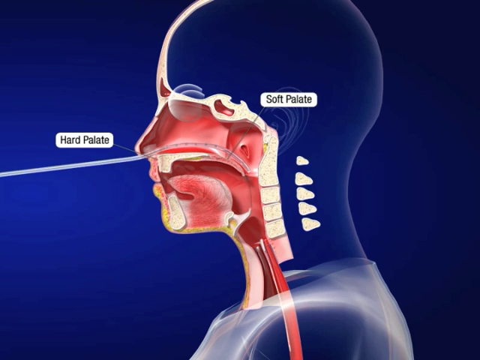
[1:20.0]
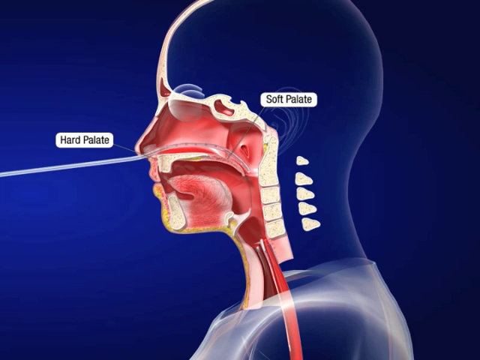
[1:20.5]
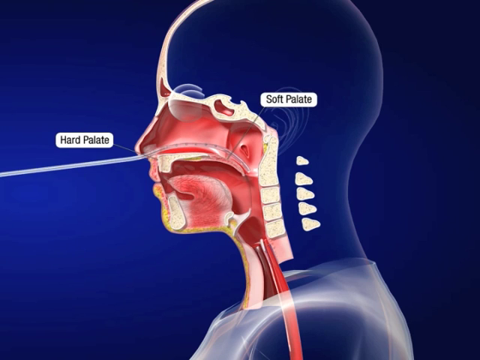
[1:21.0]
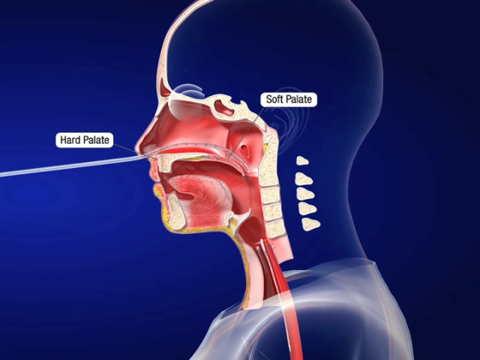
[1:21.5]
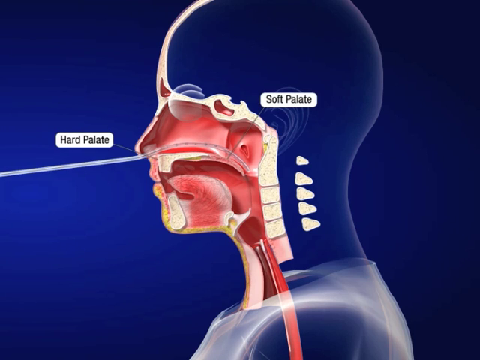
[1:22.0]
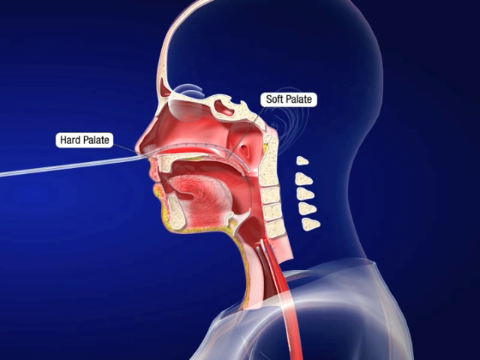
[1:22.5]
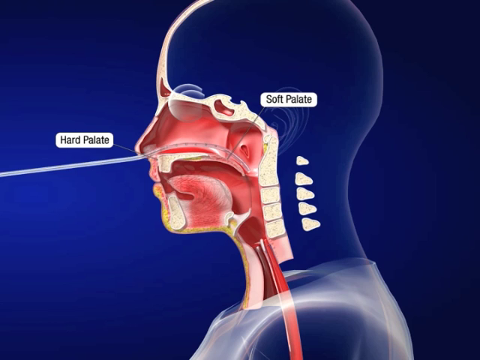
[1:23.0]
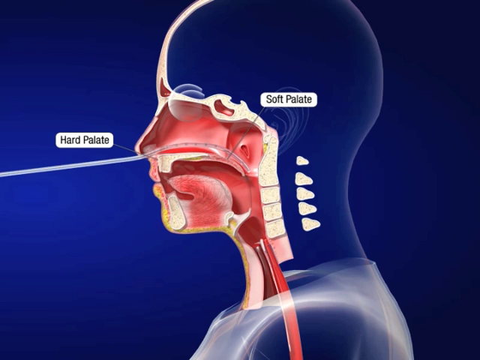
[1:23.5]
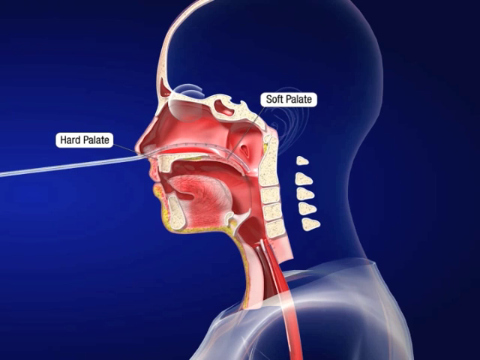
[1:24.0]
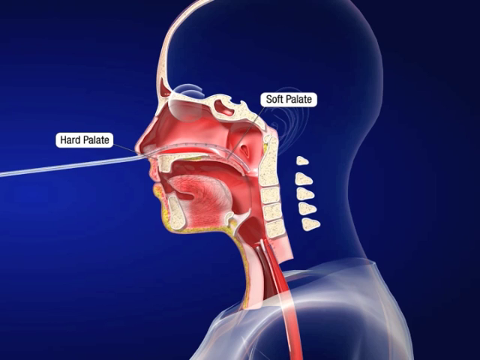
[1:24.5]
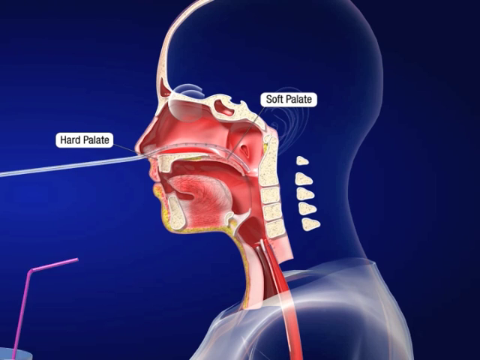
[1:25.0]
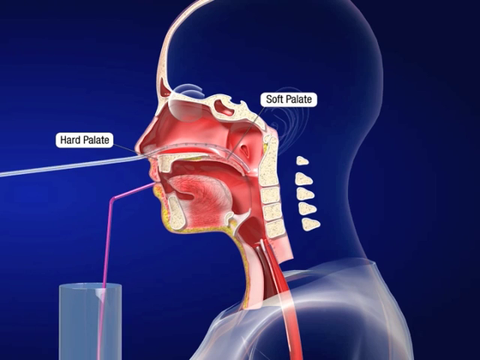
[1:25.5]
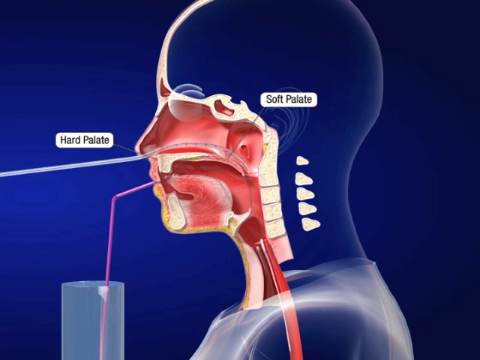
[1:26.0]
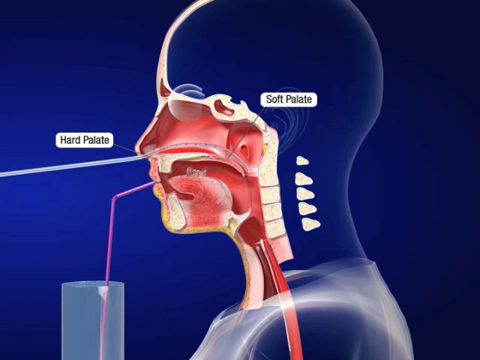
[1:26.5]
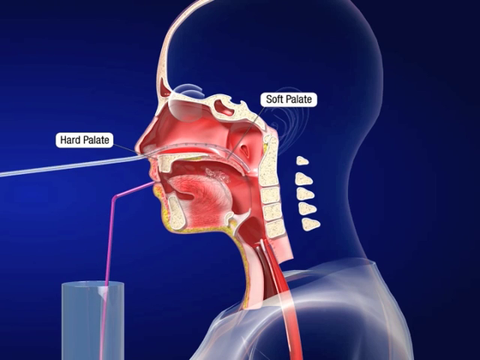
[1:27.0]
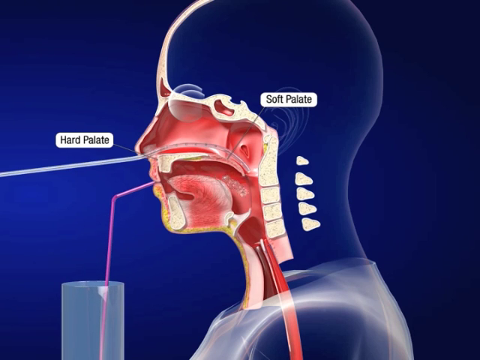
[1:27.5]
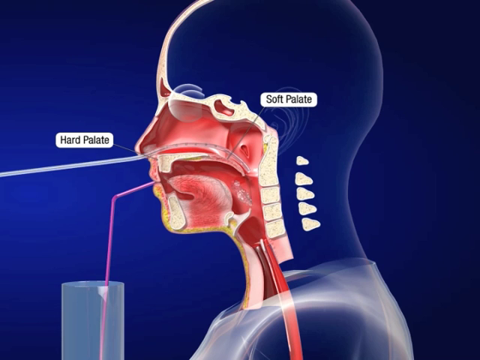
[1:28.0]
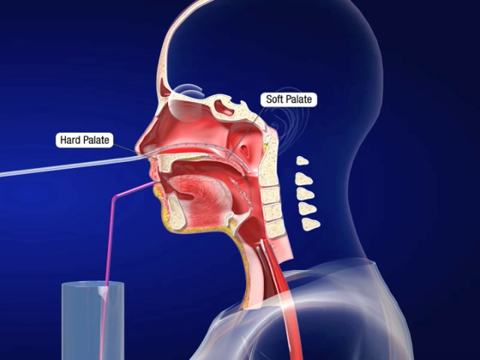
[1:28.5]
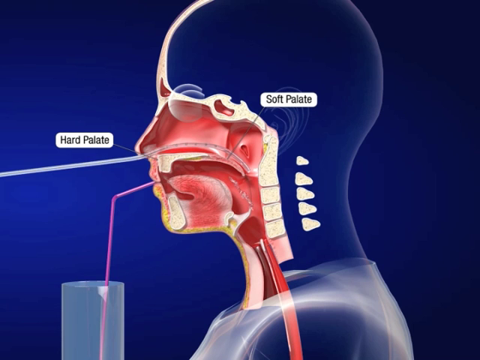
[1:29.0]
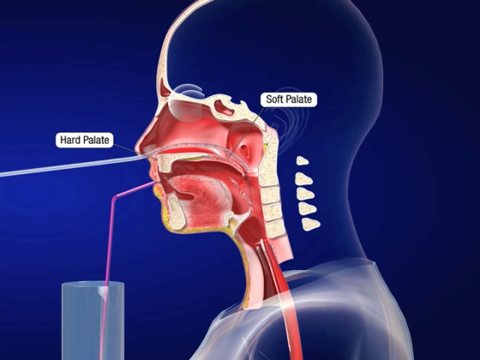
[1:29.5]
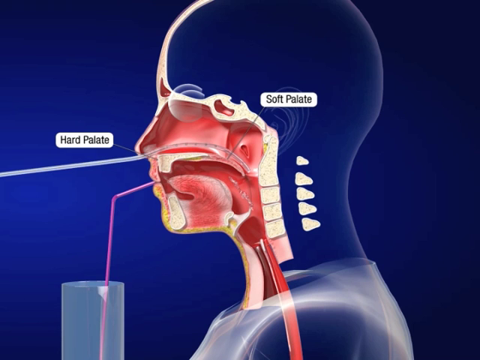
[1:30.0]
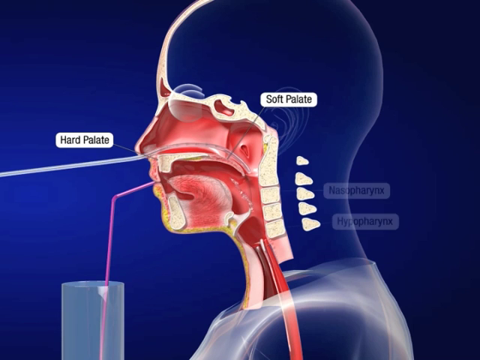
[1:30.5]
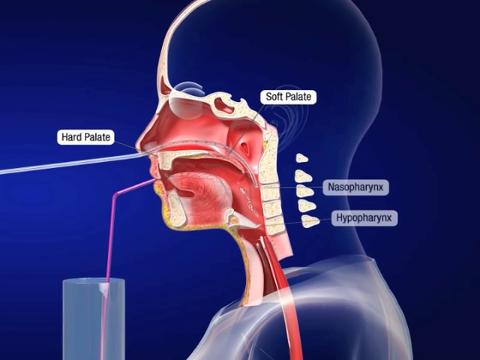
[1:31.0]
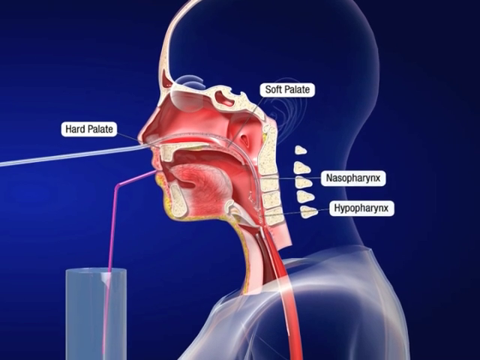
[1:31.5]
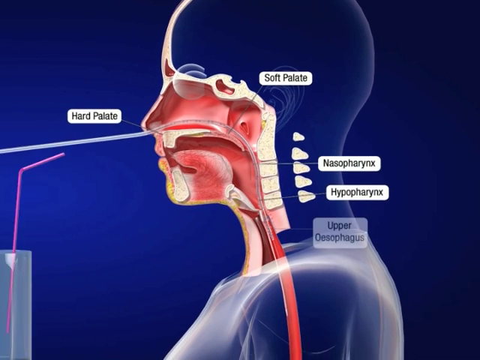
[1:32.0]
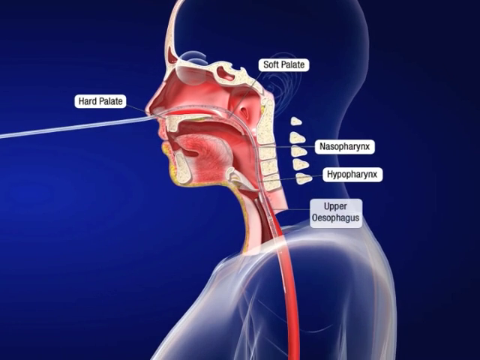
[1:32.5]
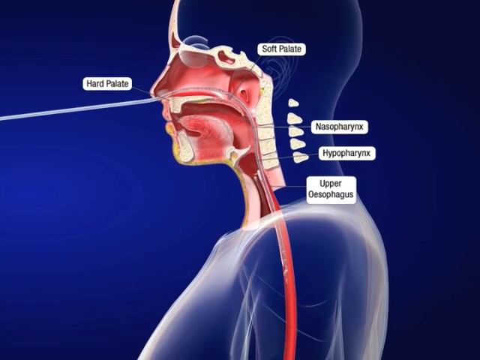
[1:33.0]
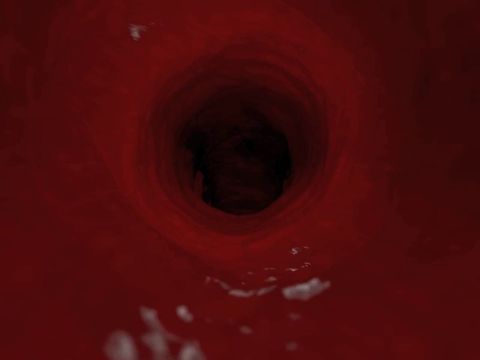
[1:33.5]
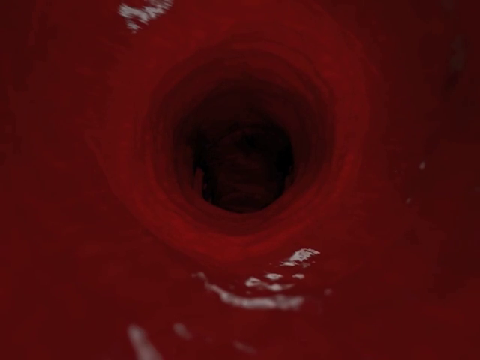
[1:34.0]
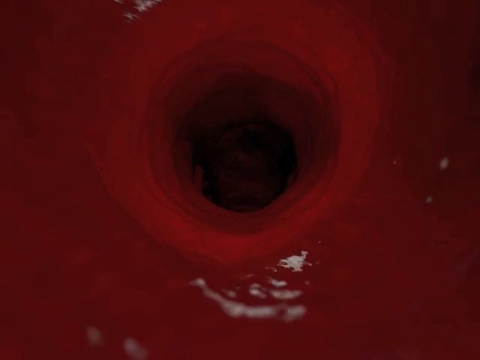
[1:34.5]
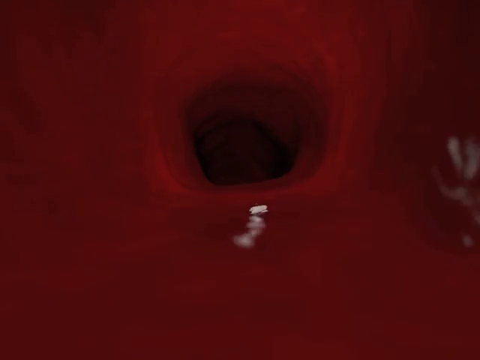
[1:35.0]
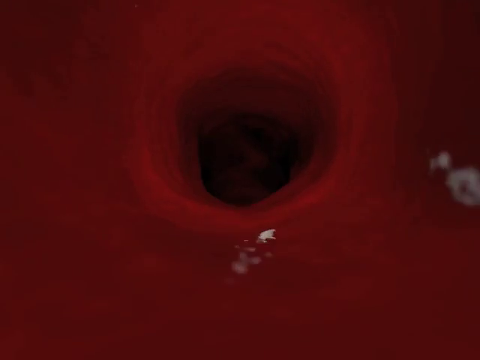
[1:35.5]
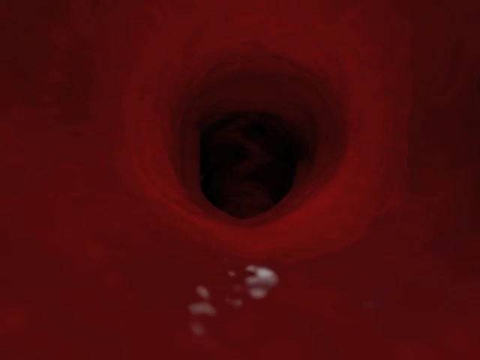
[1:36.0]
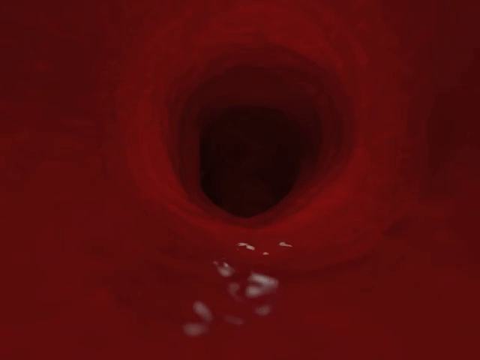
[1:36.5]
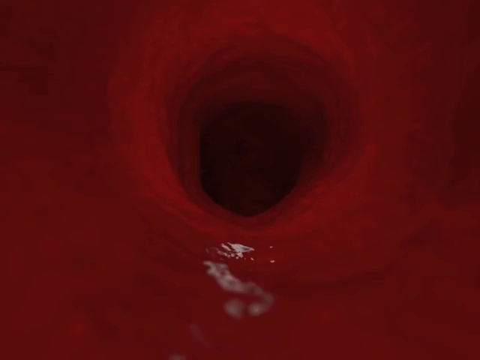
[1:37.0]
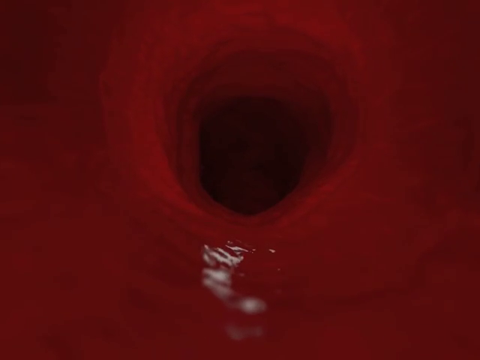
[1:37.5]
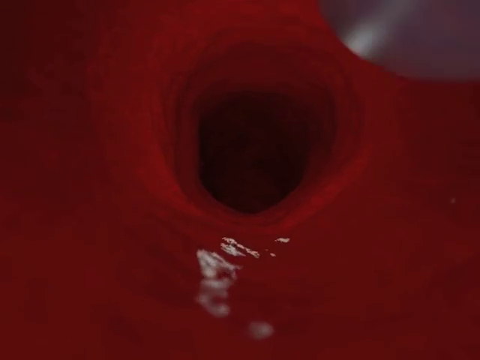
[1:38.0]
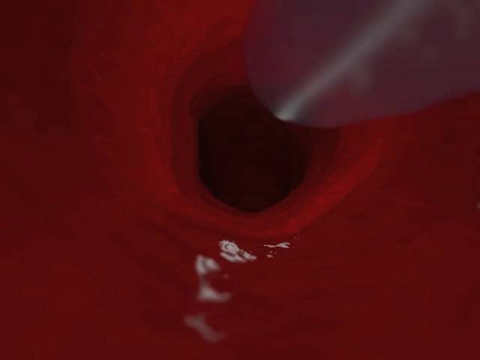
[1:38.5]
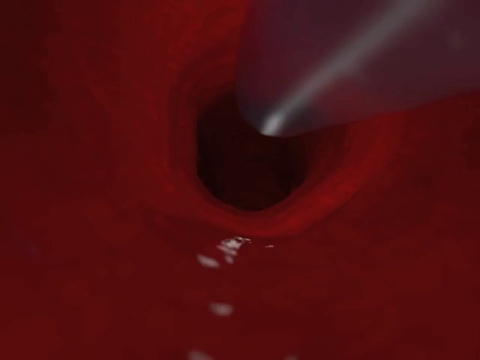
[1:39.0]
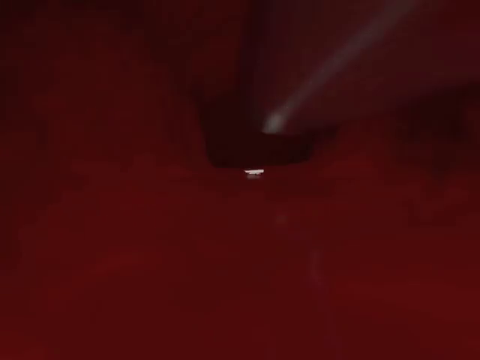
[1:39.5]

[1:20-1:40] On a blue background is a silhouette of a patient's head and neck viewed from the patient's left side, showing a cross-section of some of the facial and neck anatomy. The clear tube enters the nose and extends to the end of the soft palate, and the hard palate and soft palate are labeled. The image stays on screen for several seconds before a clear glass with a purple straw enters from the bottom left corner. The straw goes into the patient's mouth and liquid enters the mouth; droplets of the liquid go down the esophagus, and the soft palate moves up and down. The tube continues down as the cup and straw leave the scene to the left. The view then looks straight down the patient's esophagus, which is red and looks rubbery, and the tube enters the scene and travels down it.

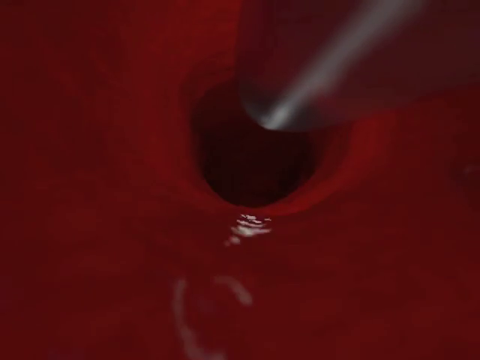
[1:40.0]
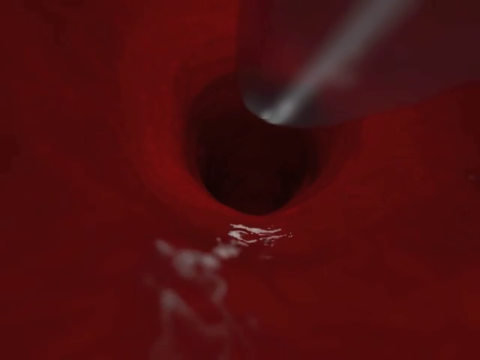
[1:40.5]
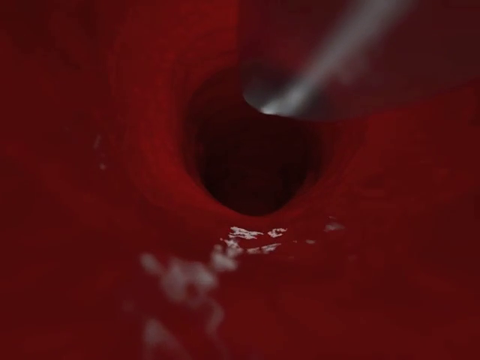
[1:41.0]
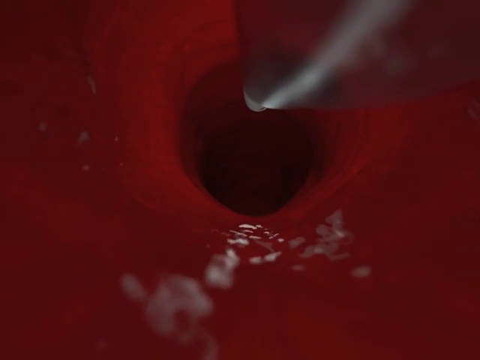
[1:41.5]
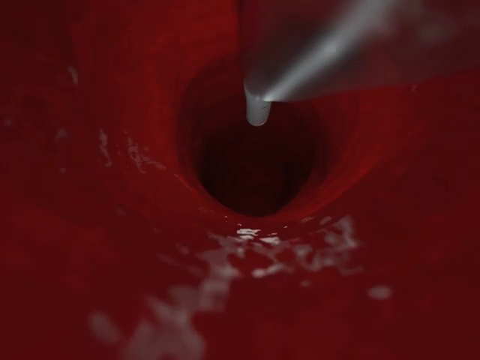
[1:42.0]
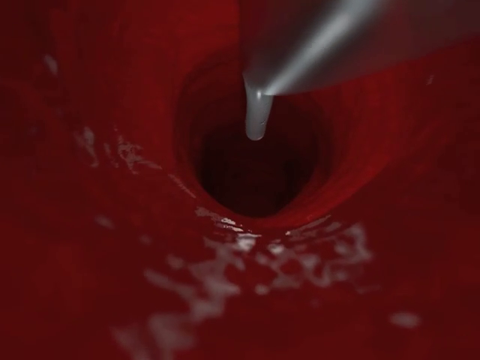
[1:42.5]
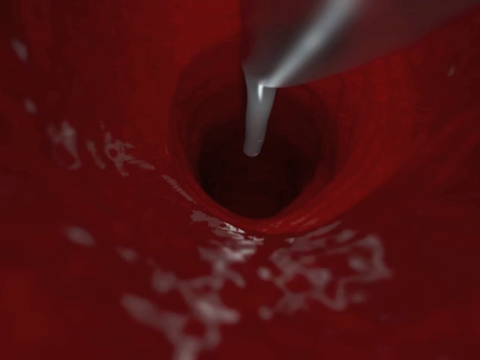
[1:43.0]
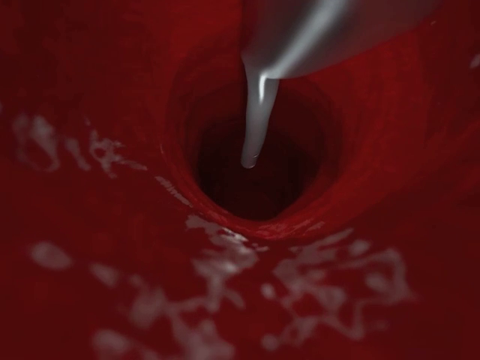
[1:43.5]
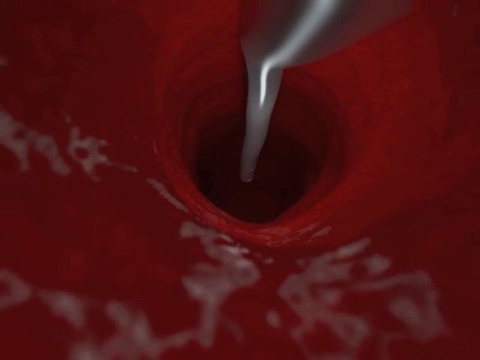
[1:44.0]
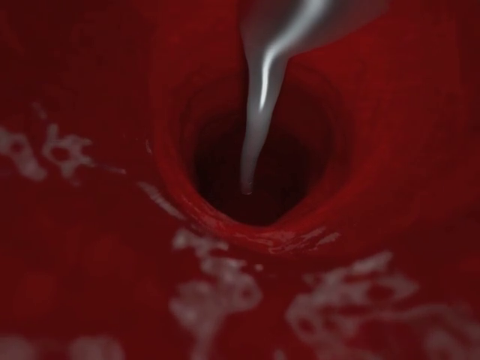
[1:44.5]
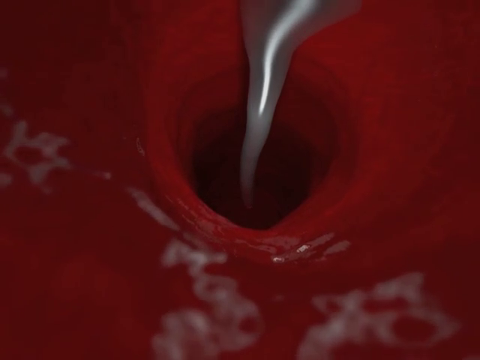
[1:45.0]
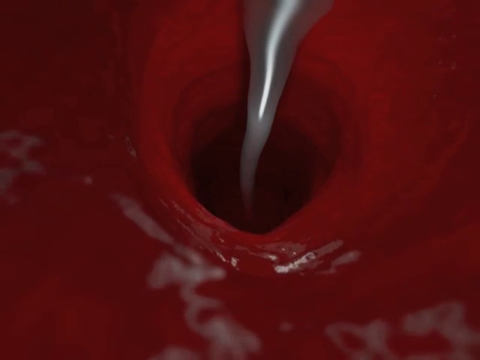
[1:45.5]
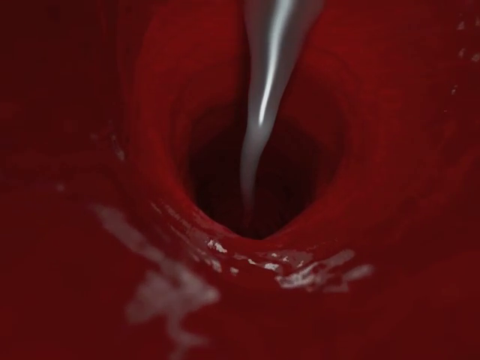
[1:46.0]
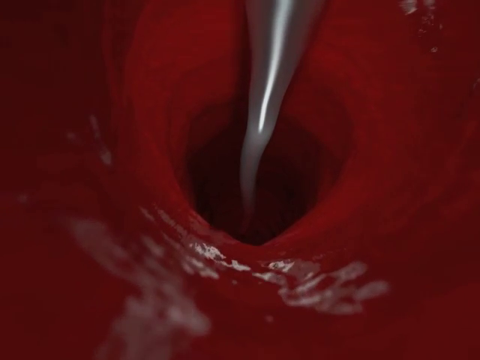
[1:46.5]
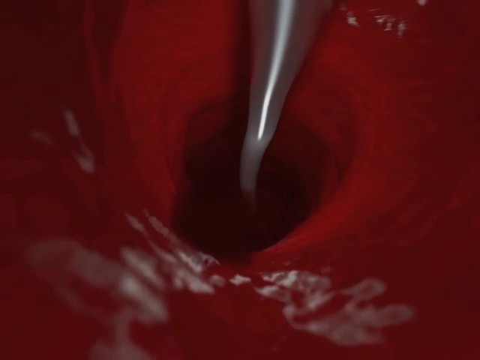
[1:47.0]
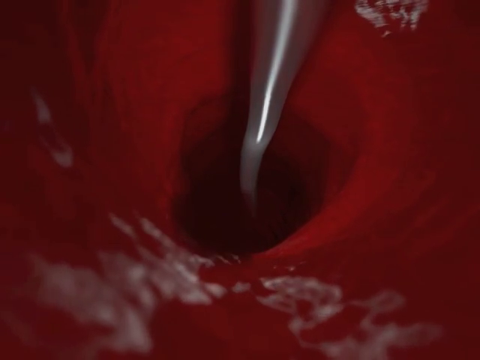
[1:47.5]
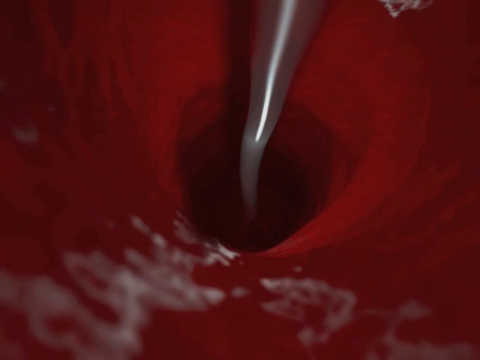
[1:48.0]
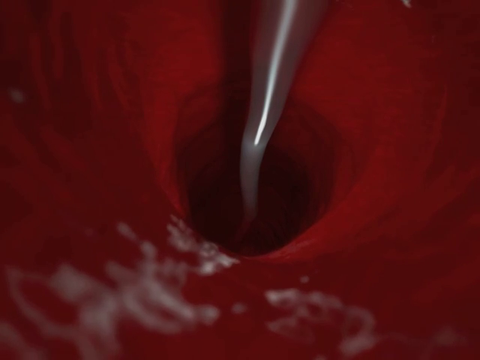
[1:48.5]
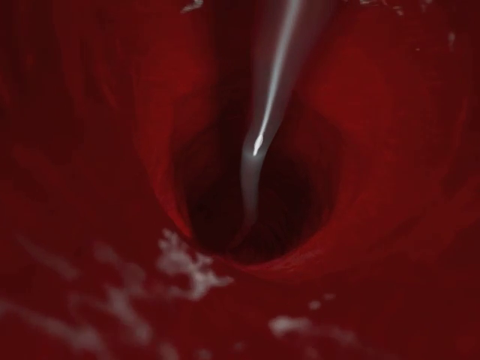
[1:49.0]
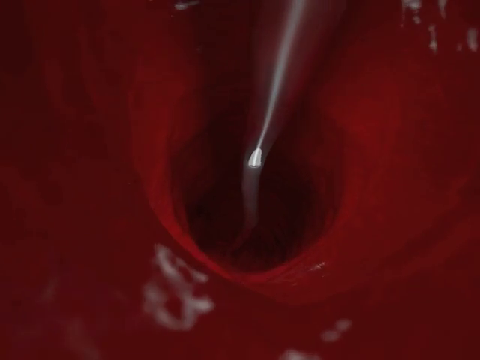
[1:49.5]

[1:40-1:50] The view looks from the top of the patient's esophagus, which looks red and rubbery. The clear Vygon medical tube enters from the top and continues down and down. At the bottom, on the side nearest the viewer, the esophagus has some shiny white markings. The tube looks grayish and bends a little as it goes down. A purplish-red blob appears briefly at the bottom of the tube. The next scene is a blue background with the patient's silhouette viewed from the left, from the bottom of the nose down to her lower torso.